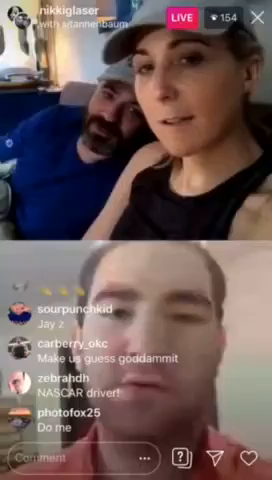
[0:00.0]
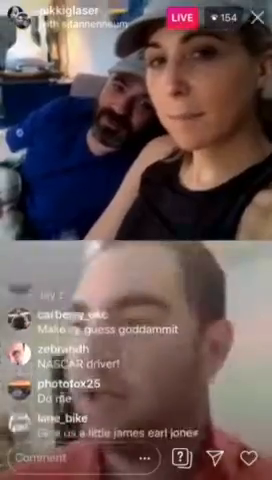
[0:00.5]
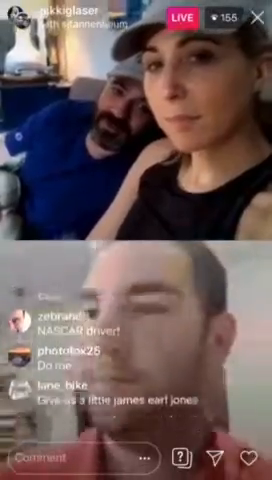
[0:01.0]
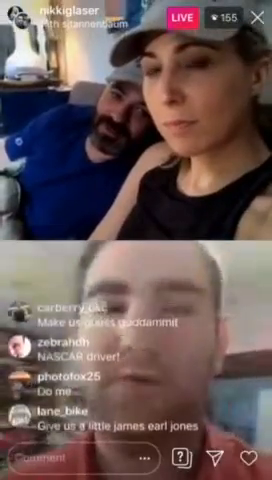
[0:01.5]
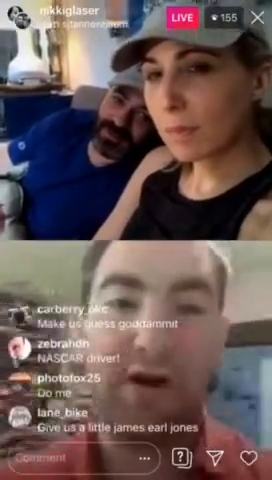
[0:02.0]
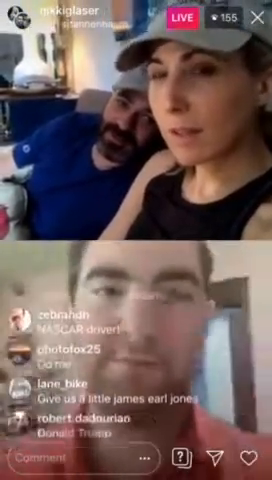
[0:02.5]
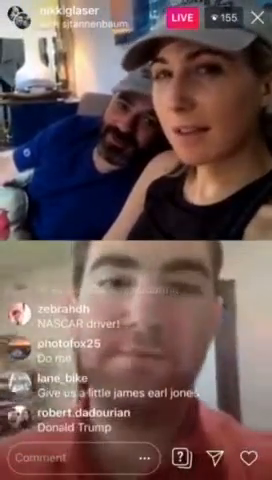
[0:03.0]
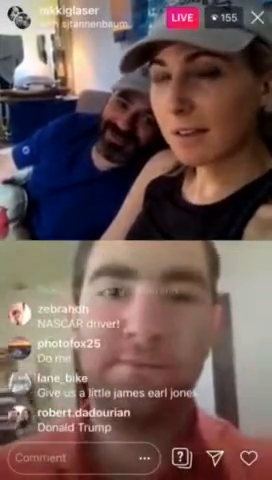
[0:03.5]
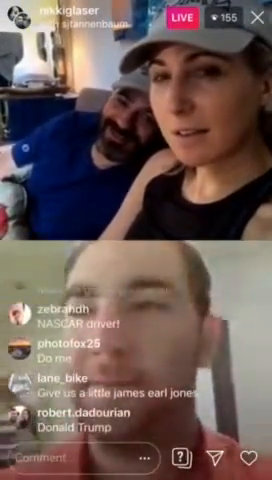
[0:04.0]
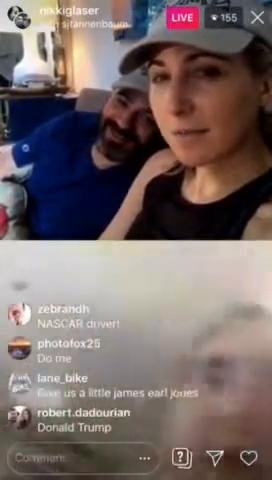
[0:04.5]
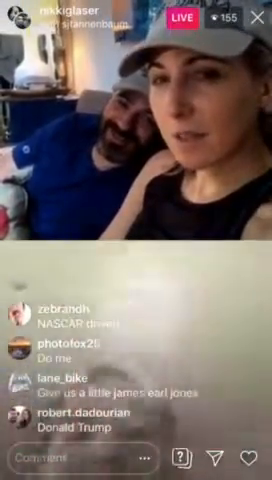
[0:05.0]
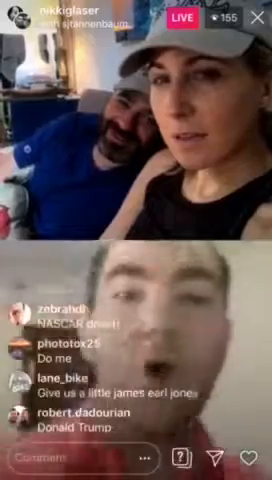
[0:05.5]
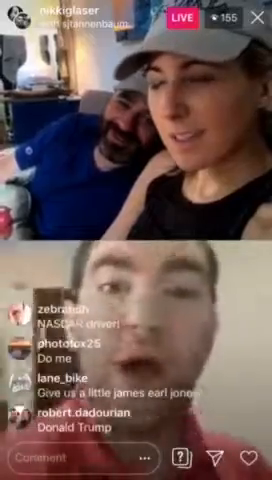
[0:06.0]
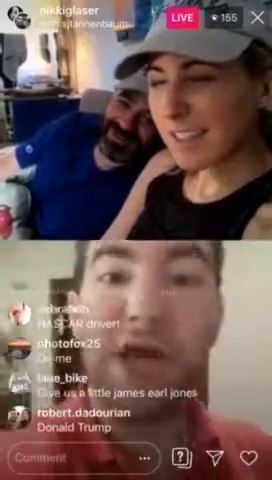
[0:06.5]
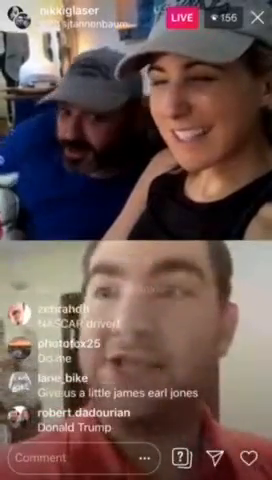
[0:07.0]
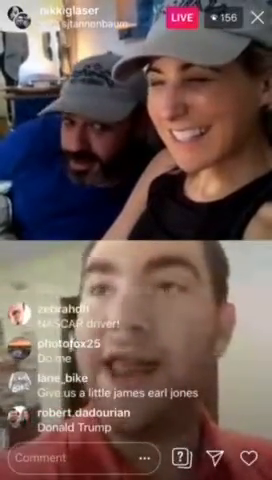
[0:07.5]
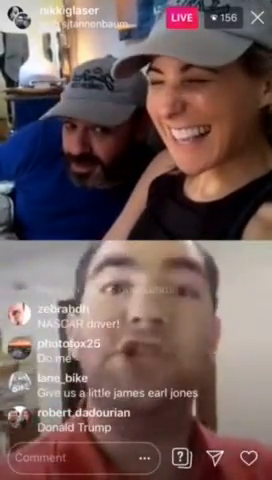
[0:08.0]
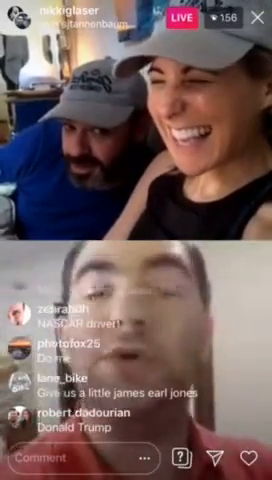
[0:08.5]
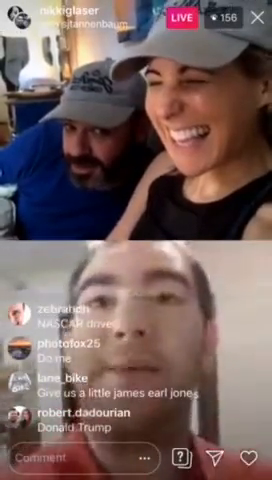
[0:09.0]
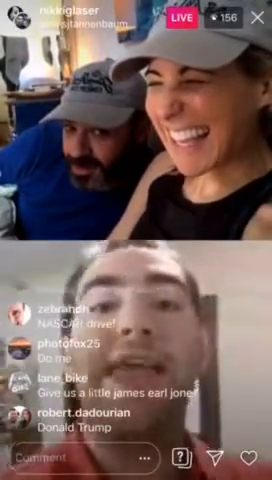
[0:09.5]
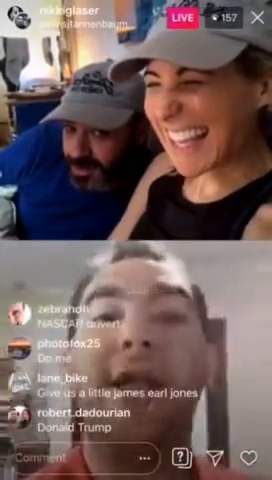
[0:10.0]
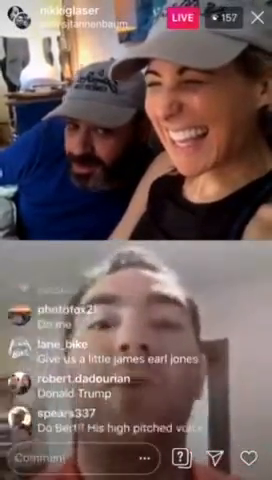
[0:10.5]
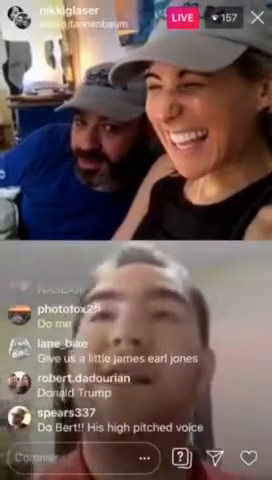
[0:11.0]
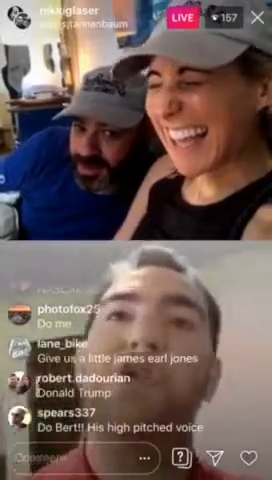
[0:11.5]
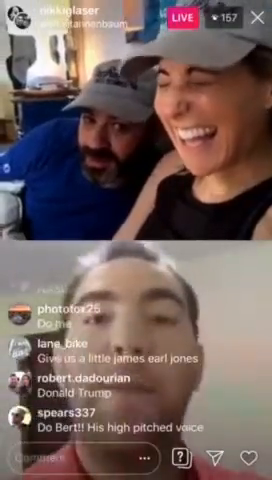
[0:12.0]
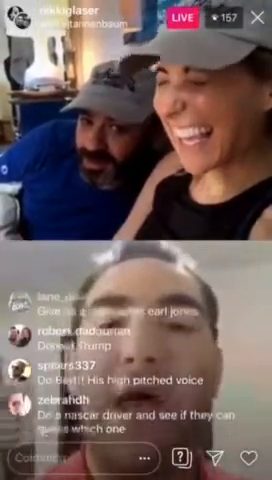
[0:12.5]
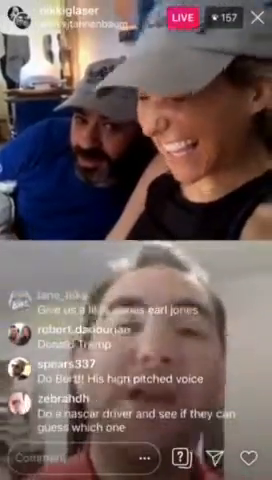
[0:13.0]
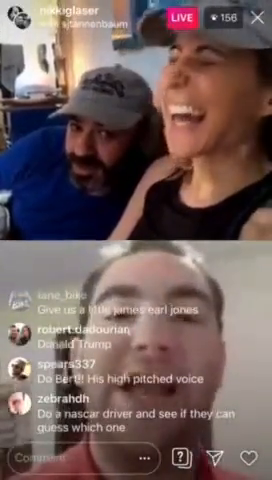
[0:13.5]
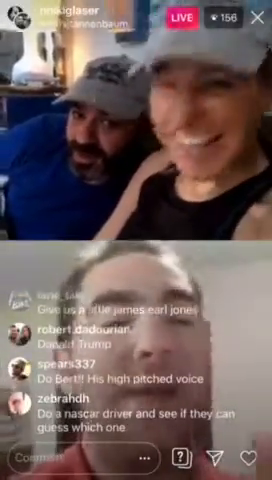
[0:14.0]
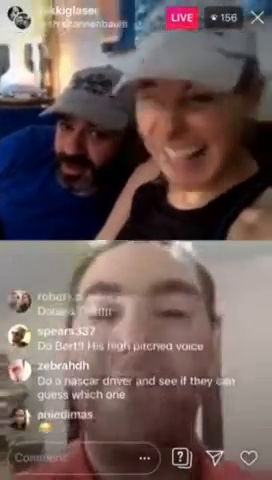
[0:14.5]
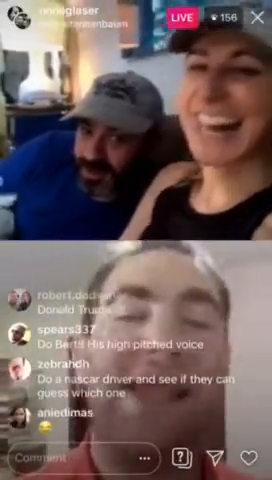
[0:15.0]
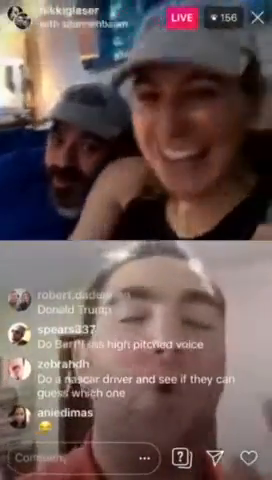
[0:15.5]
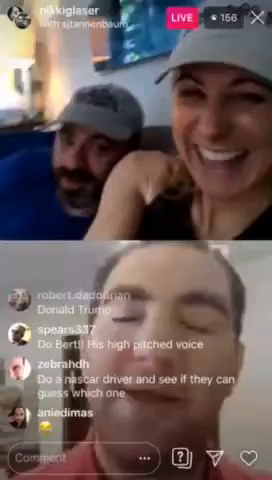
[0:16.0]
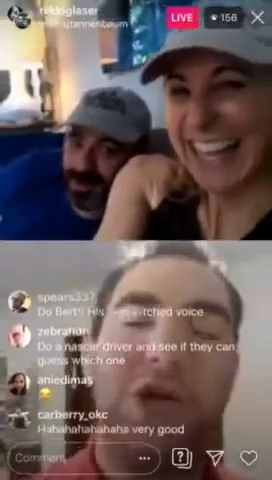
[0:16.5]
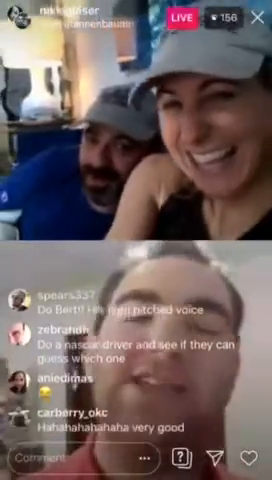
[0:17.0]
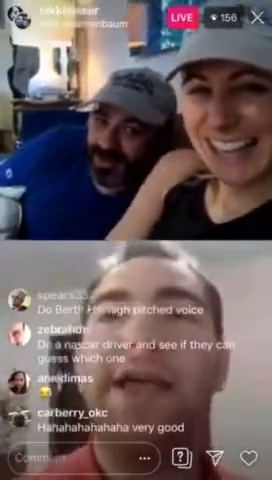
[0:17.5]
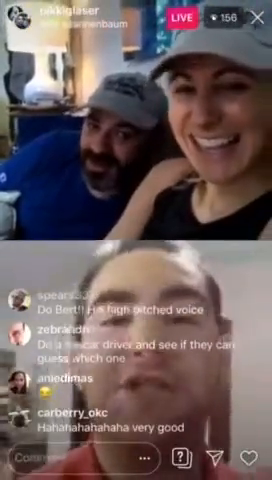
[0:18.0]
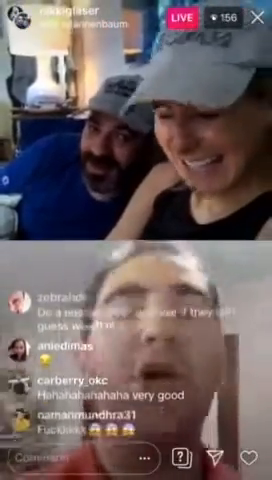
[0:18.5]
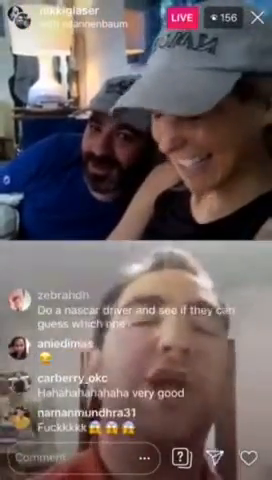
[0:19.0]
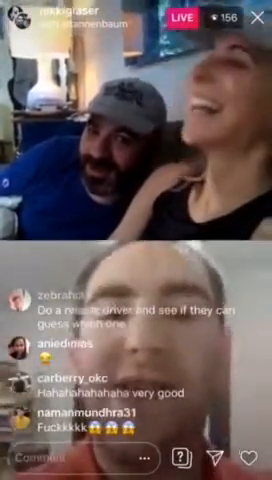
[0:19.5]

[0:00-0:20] A live stream appears with the screen divided into two halves, top and bottom. Across the bottom, on the right, there is a heart icon, with an arrow icon next to it and a question mark next to that. The rest of the bottom holds a text box, and above it people's usernames and messages scroll up as the chat moves. At the very top edge, there is an X in the right corner, followed by a box with a number and a red box indicating live. In the left corner are some profile icons and the name Nikki Glaser. In the top half, a man and a woman appear to be sitting on a couch, looking at the camera. In the bottom half, a man speaks to the camera; he seems loud and bombastic. The woman starts smiling and nodding her head, and the man leans in a little closer.